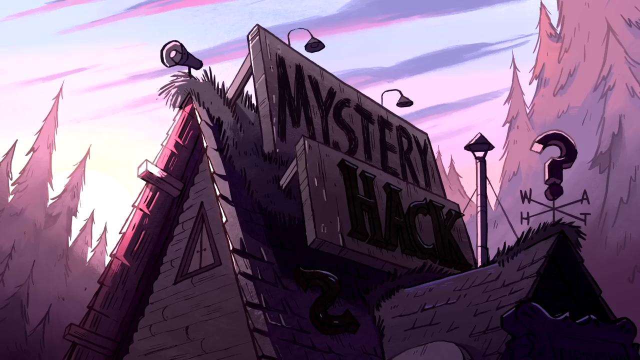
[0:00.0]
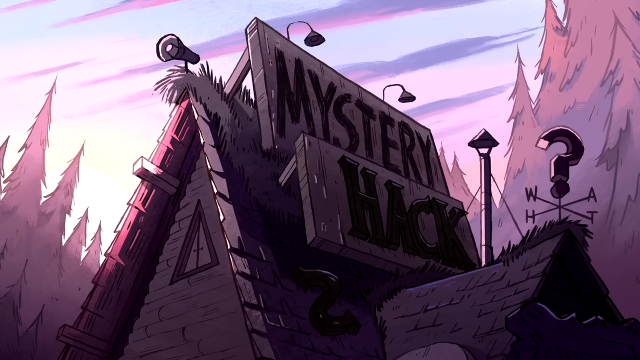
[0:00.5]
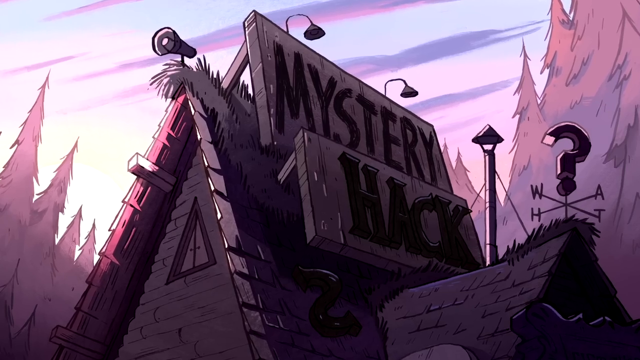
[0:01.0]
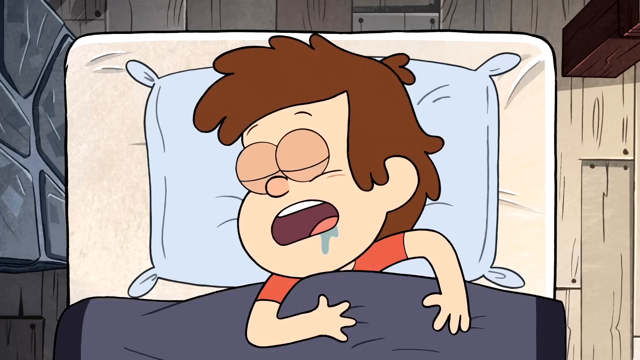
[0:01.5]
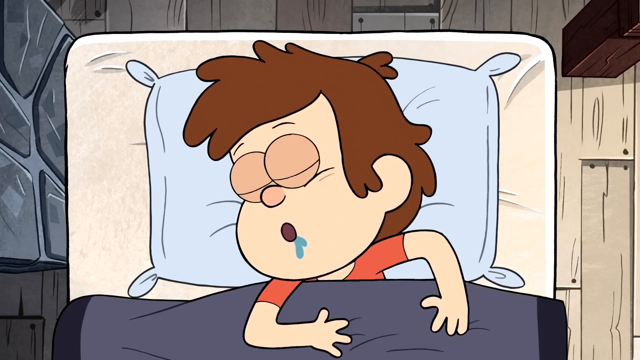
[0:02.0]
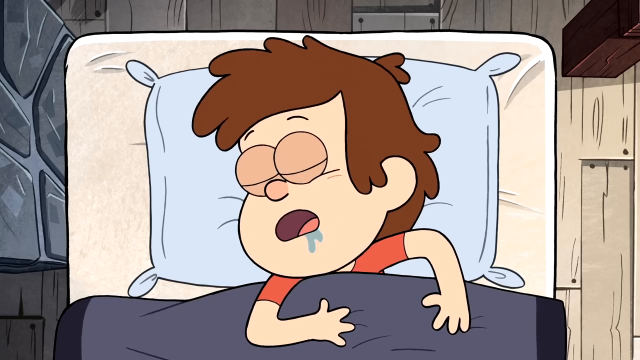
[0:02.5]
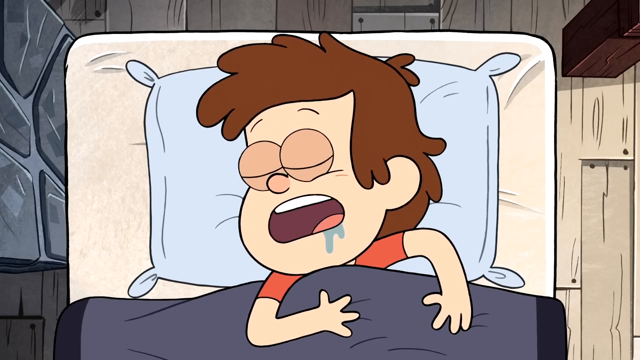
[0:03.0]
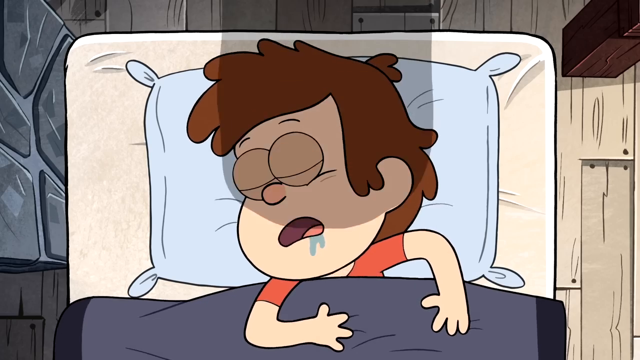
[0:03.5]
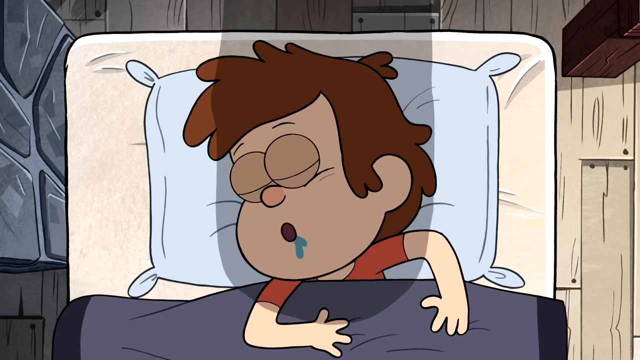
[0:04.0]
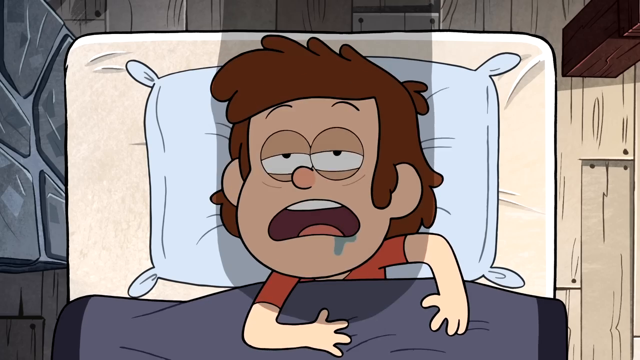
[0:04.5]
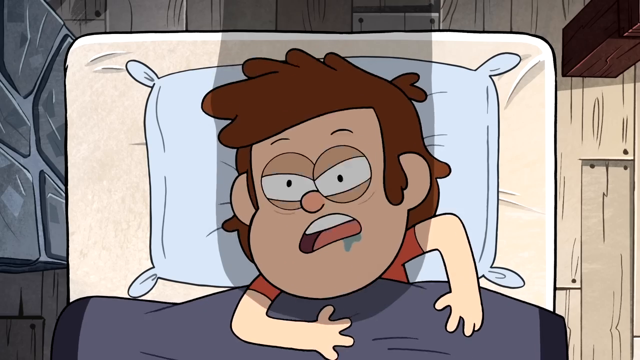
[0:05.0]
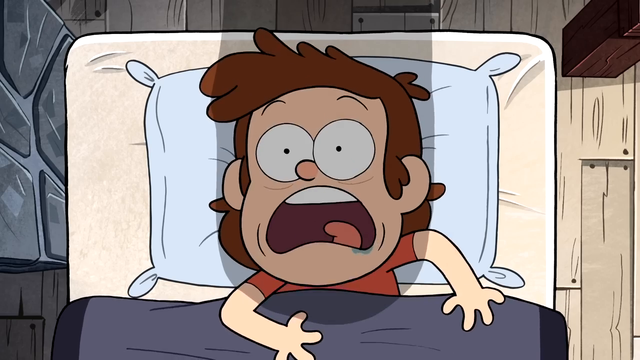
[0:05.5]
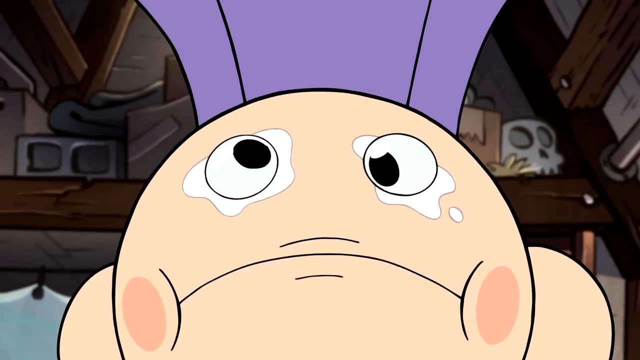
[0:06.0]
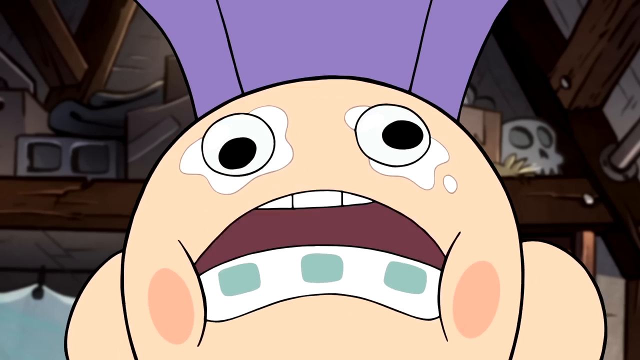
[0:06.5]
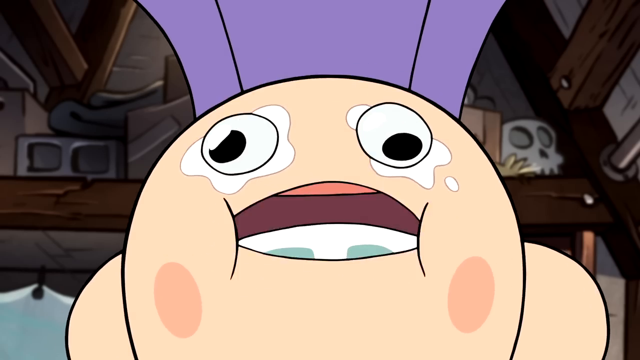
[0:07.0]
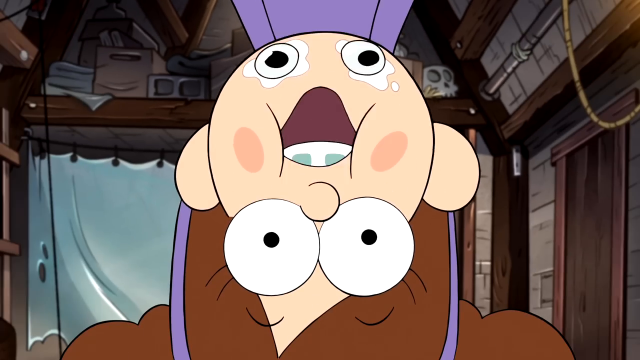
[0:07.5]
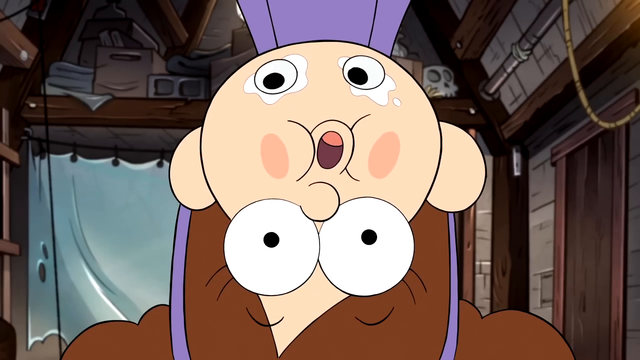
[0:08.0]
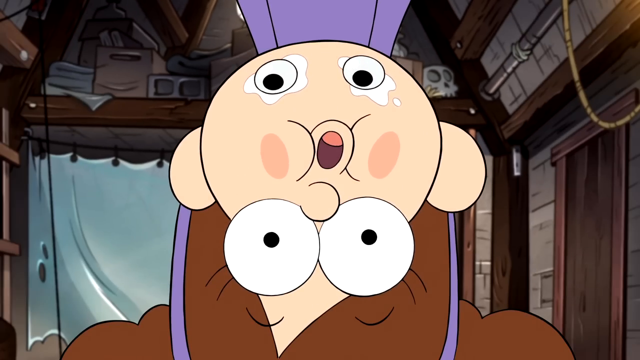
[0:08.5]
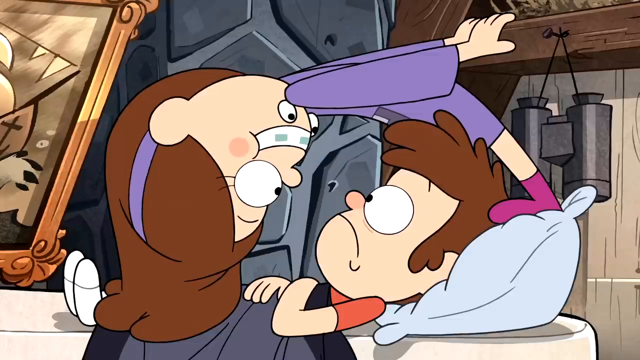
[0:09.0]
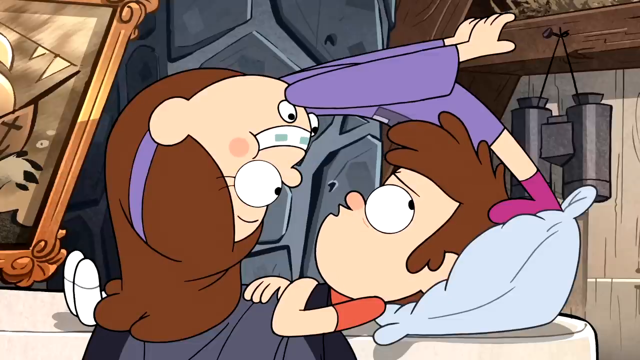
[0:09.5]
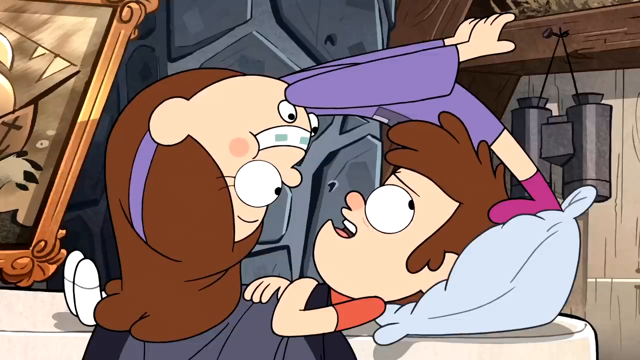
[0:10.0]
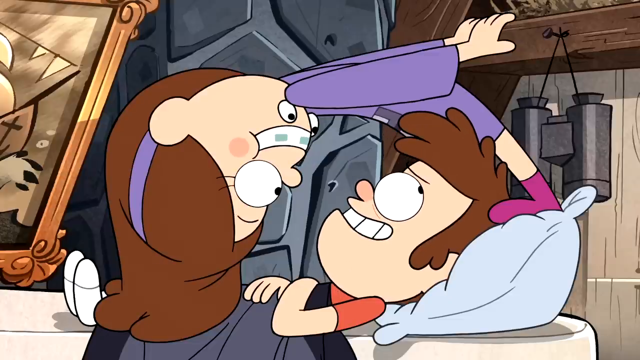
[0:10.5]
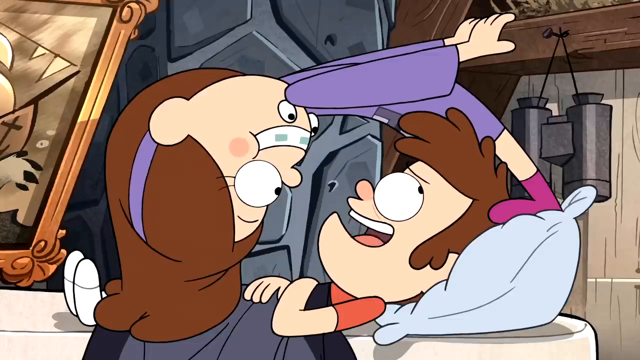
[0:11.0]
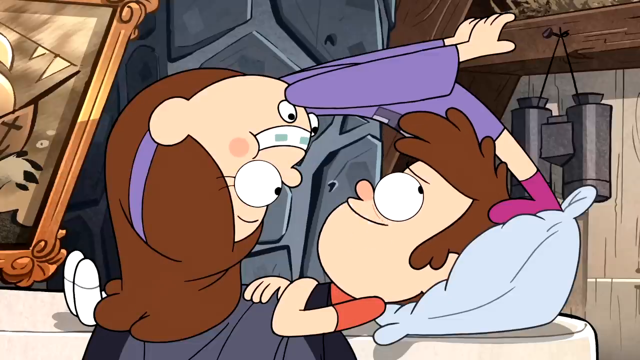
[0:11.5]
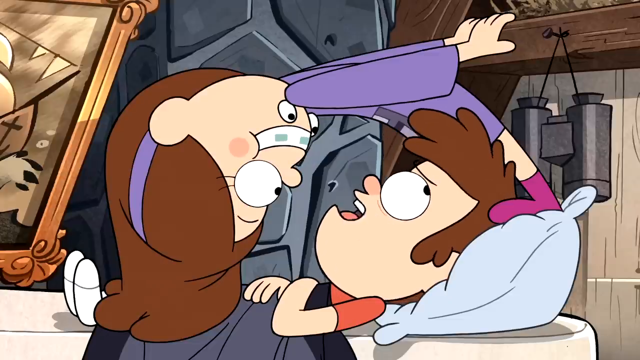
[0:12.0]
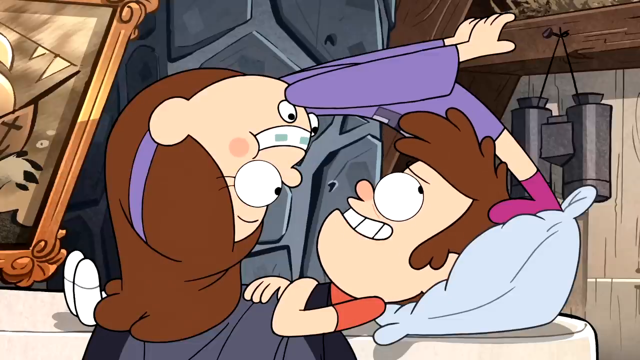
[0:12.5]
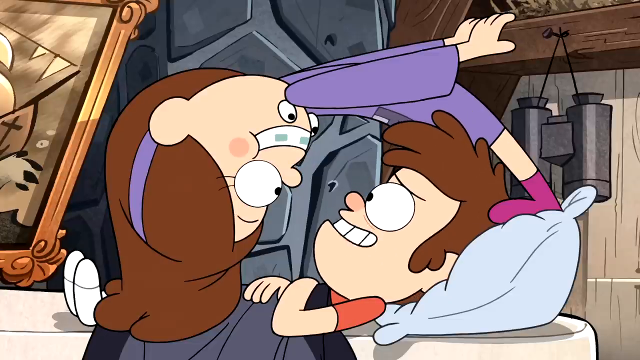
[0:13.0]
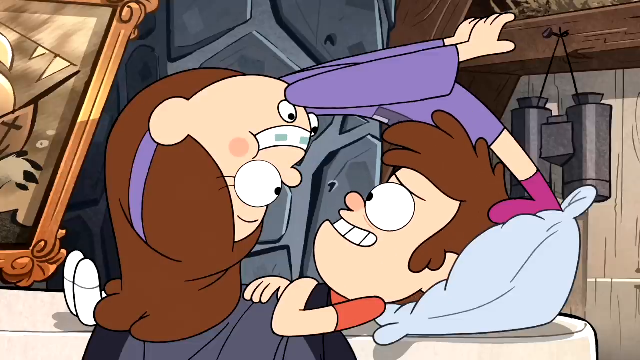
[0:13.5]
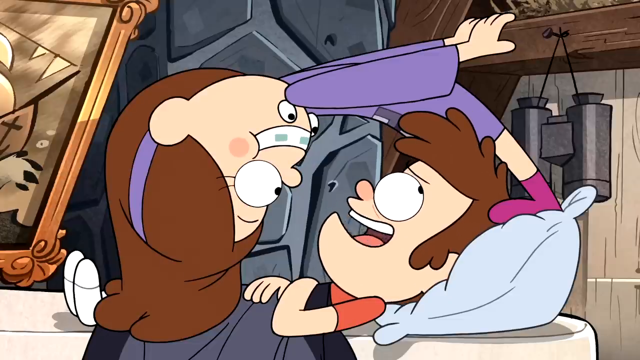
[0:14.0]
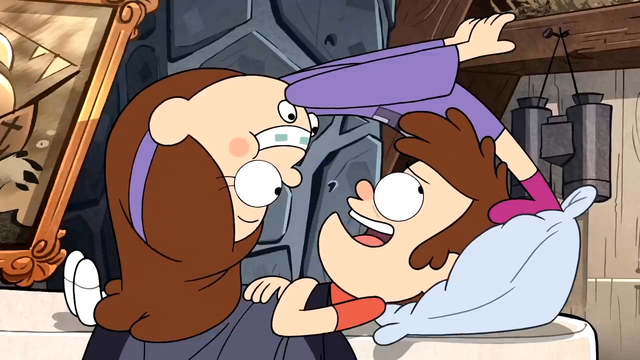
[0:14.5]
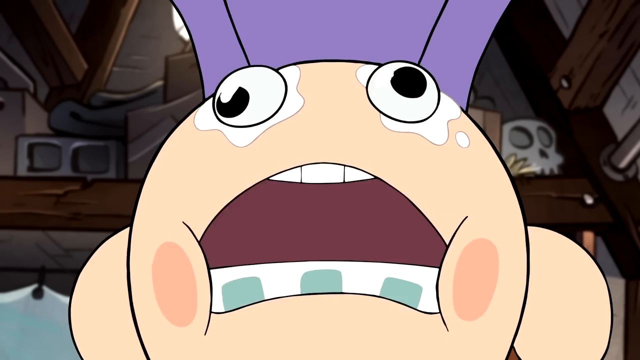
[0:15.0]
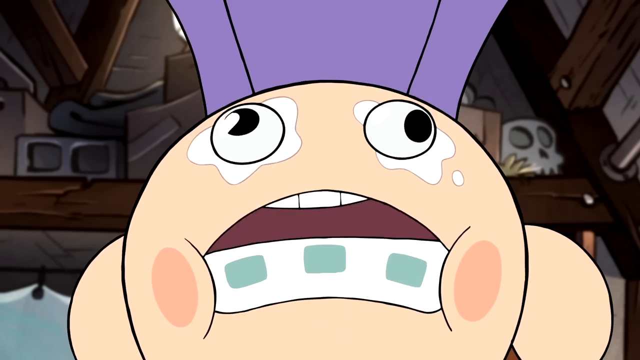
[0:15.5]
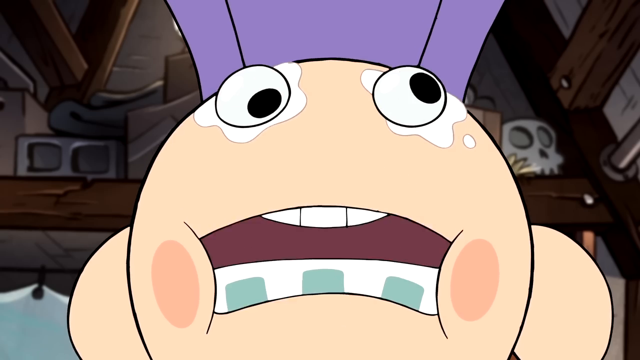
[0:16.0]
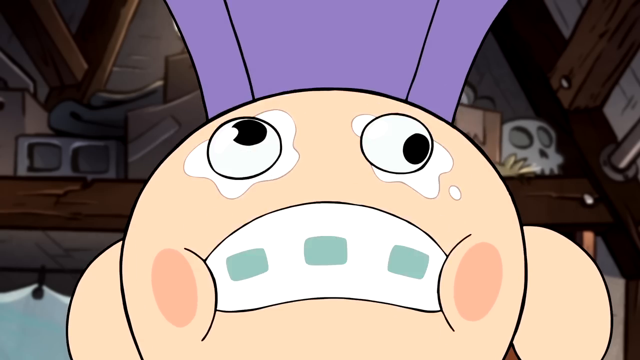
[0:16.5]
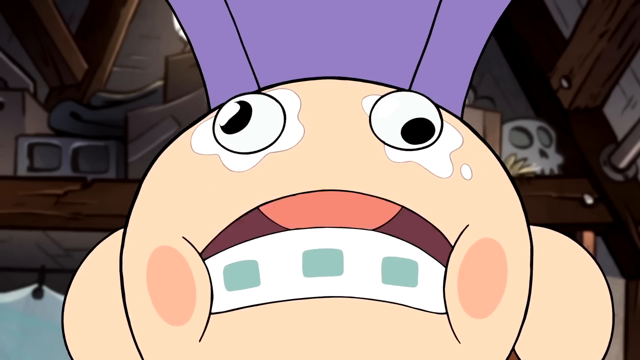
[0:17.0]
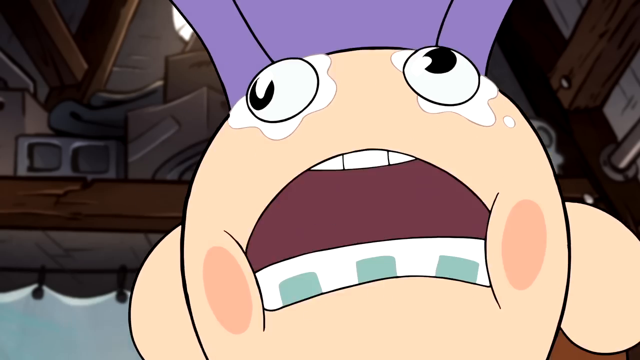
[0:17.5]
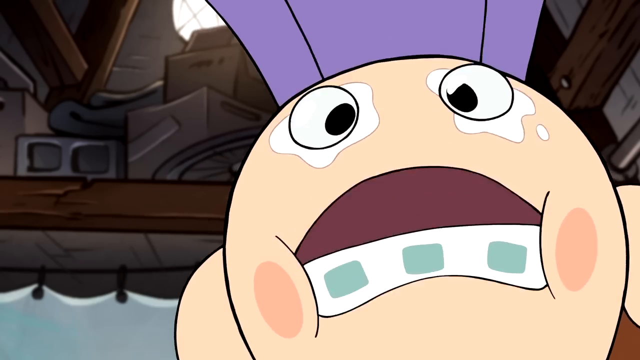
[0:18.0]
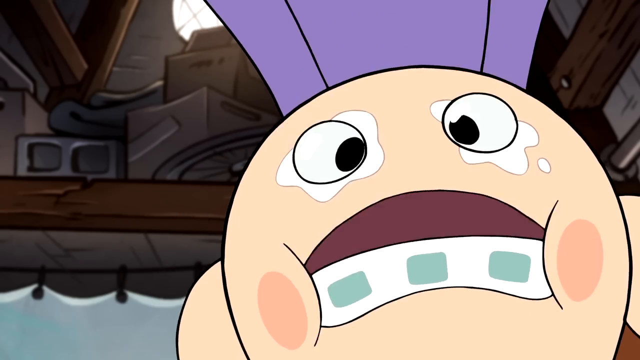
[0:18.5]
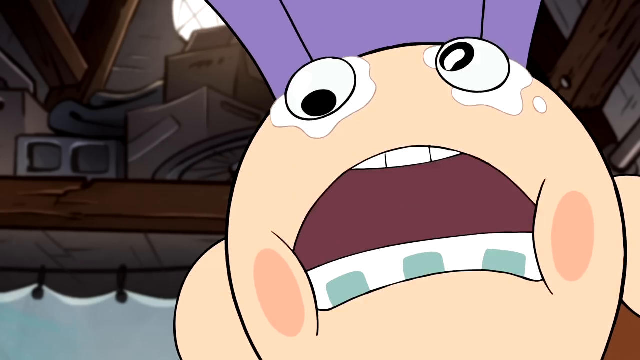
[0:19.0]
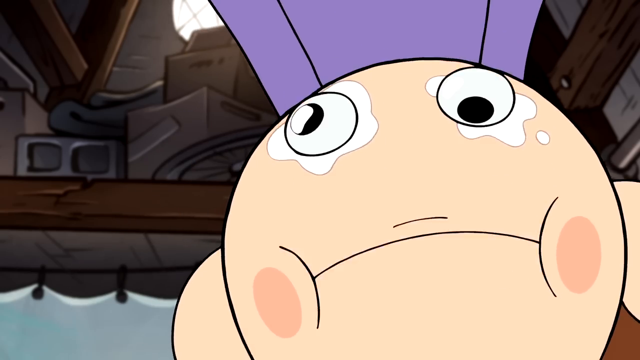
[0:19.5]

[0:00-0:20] The video is an animation. It opens by zooming in to a building with red trees in the background. The building has a sign that says "mystery hack," and there is a question mark on top of the house, along with a microphone with some lights. The scene moves to a boy sleeping and drooling in bed, covered with a gray blanket. He has short brown hair. A shadow passes over him and he opens his eyes, his mouth open, looking shocked and scared: a cream-colored monster that seems to have two eyeballs underneath its chin as well as its regular two eyes is talking to him. It turns out to be a girl with long brown hair, wearing a purple outfit, pink socks and a purple headband. She leans over him while he is in bed, and they talk to each other as he looks behind him. A close-up shows the girl talking; she appears to be wearing braces.